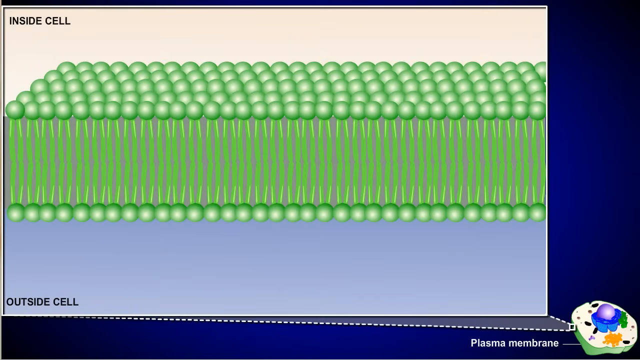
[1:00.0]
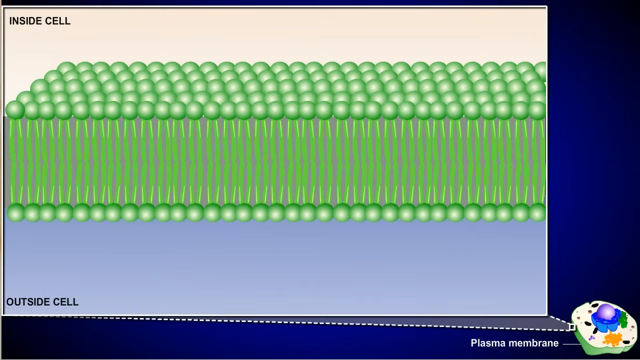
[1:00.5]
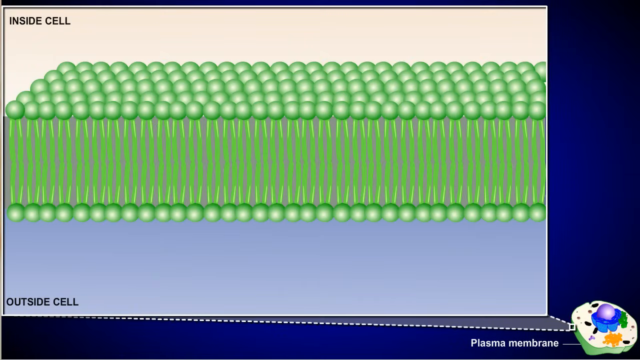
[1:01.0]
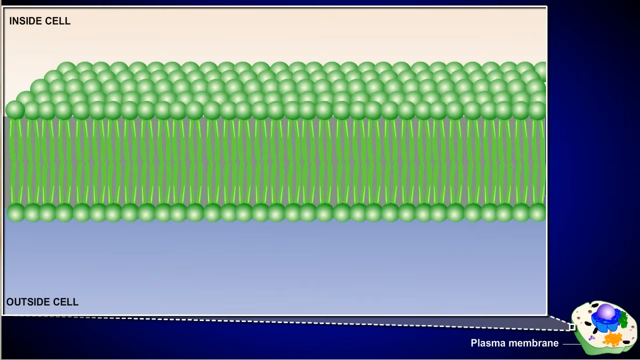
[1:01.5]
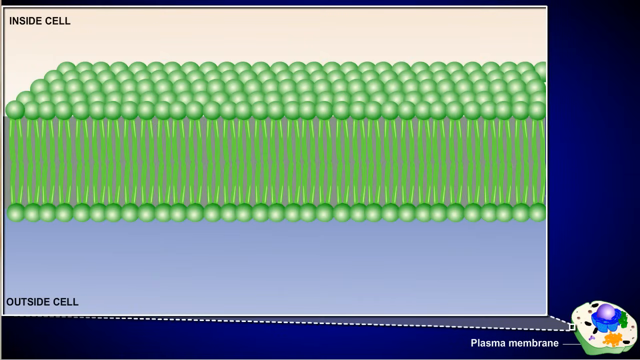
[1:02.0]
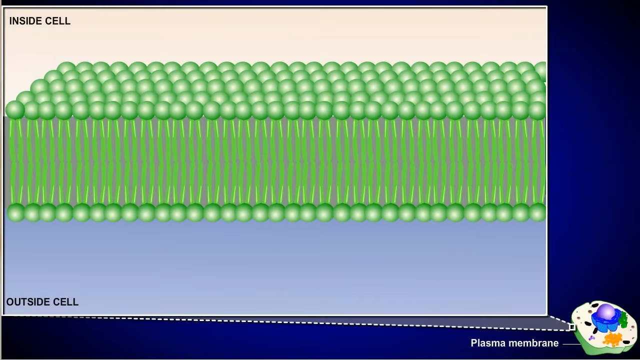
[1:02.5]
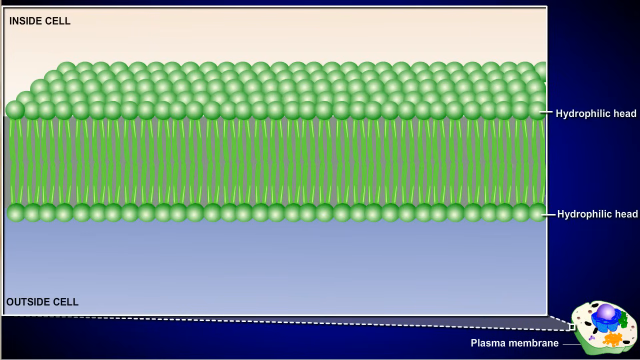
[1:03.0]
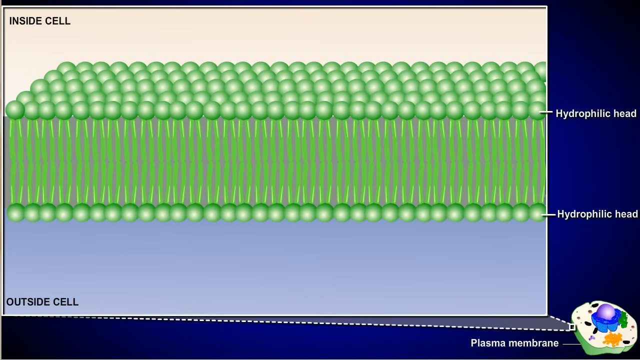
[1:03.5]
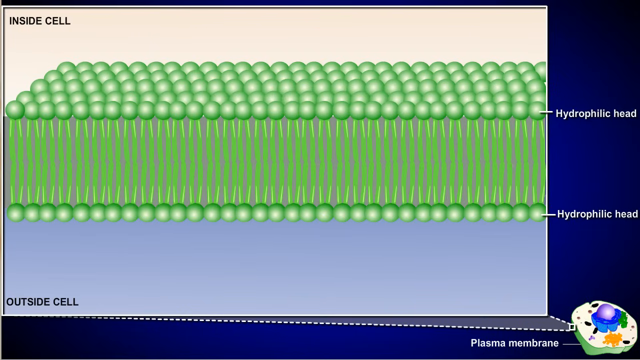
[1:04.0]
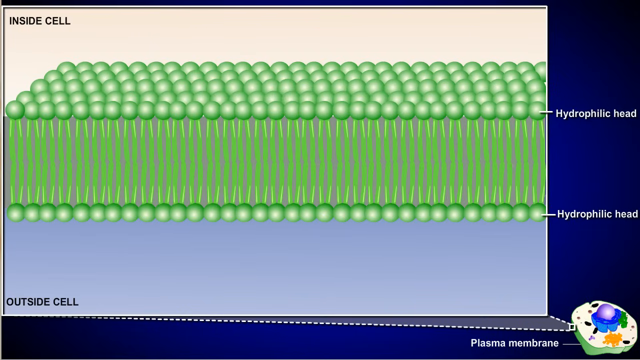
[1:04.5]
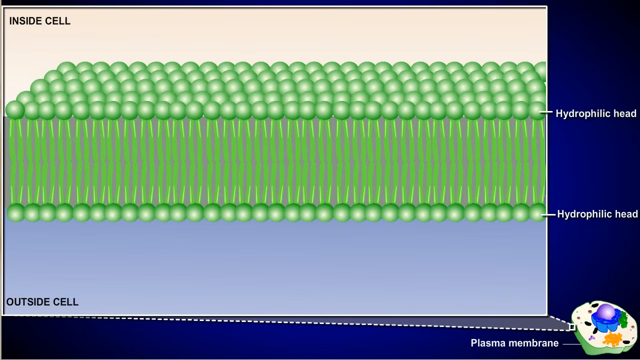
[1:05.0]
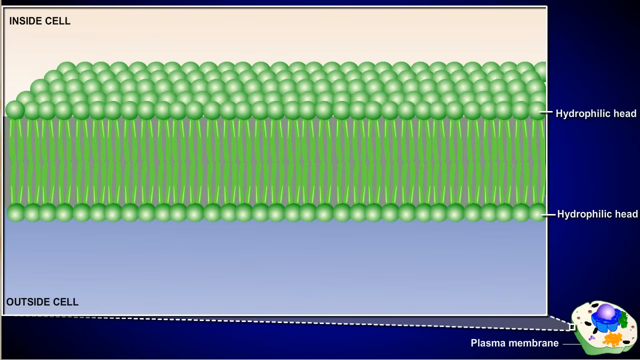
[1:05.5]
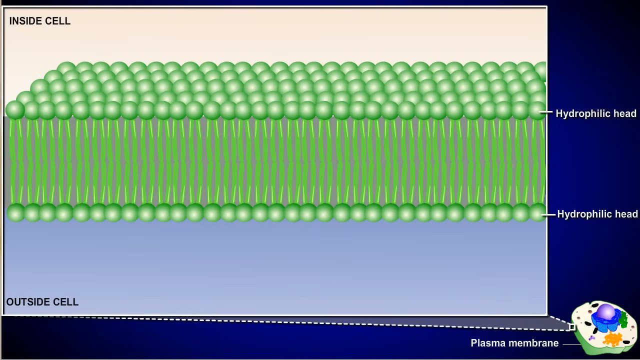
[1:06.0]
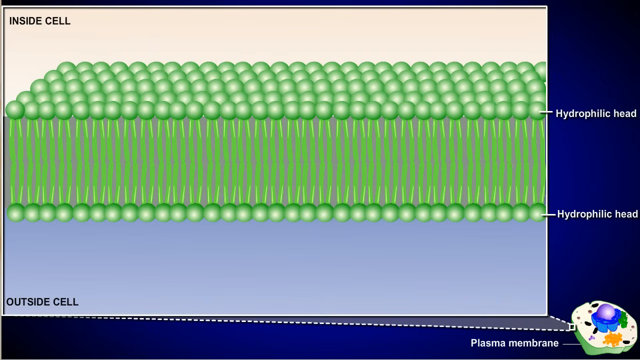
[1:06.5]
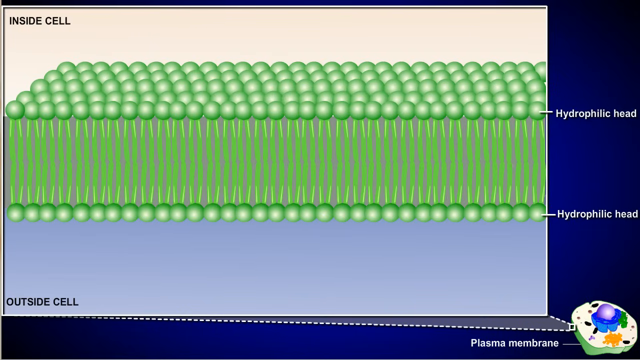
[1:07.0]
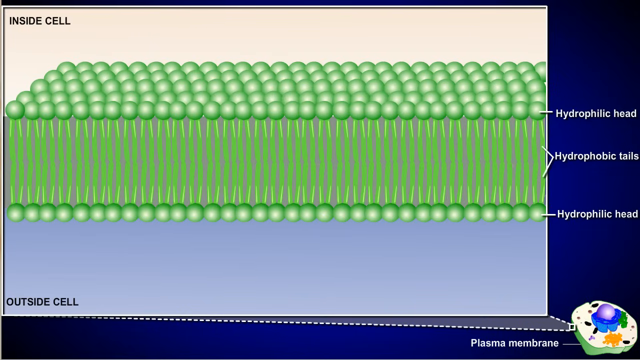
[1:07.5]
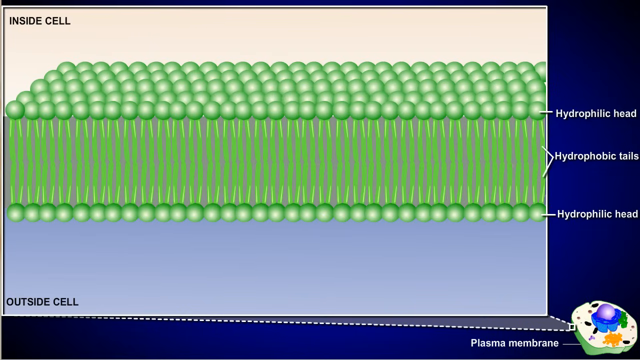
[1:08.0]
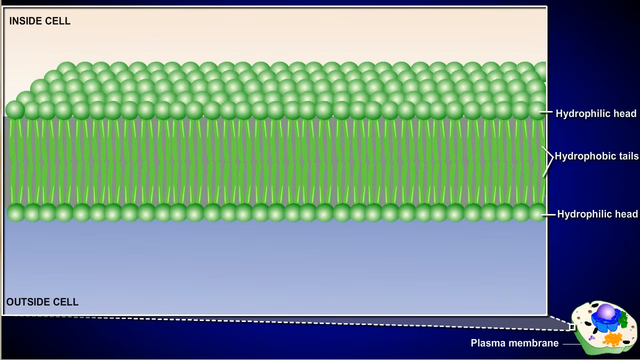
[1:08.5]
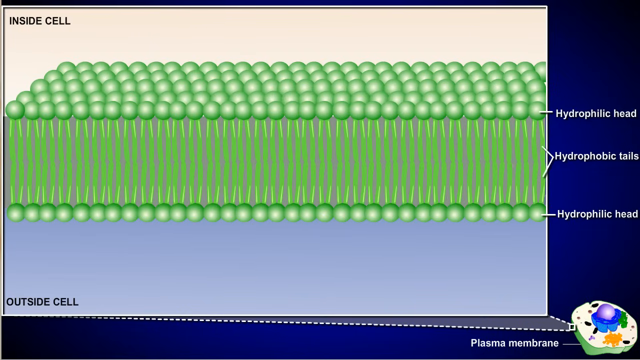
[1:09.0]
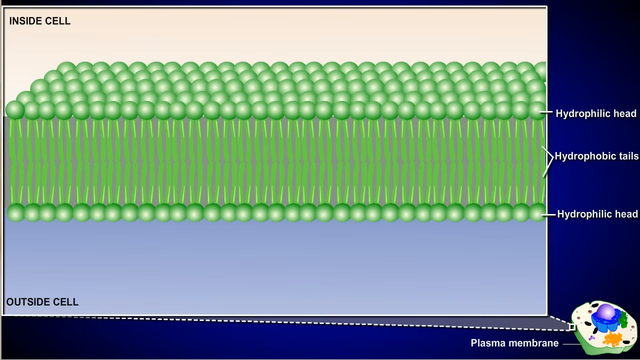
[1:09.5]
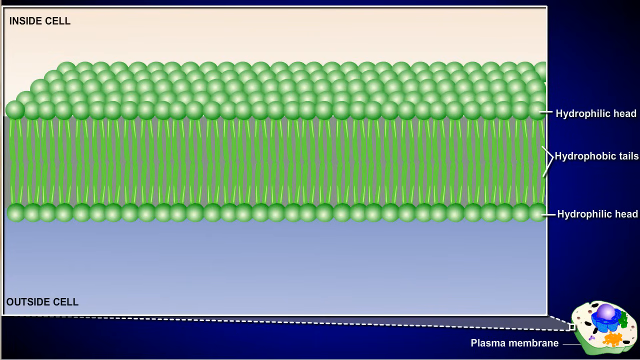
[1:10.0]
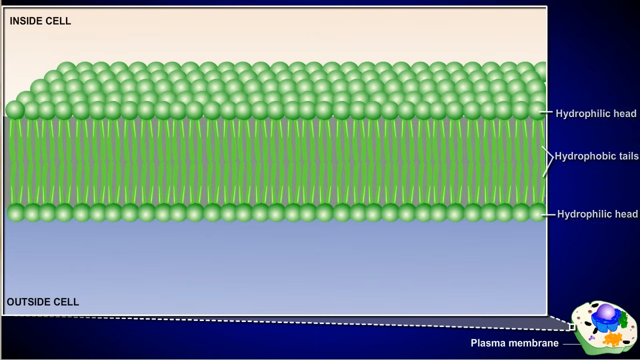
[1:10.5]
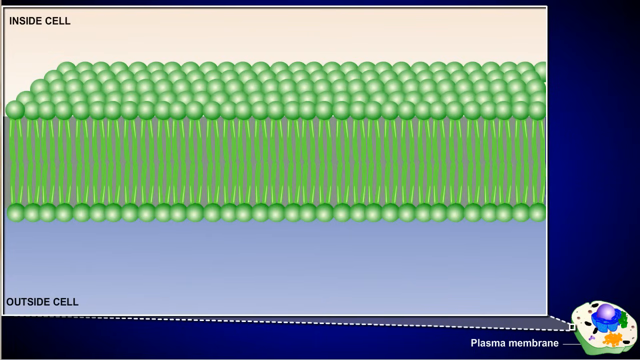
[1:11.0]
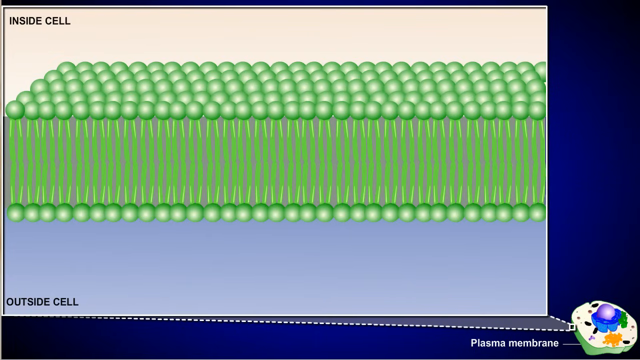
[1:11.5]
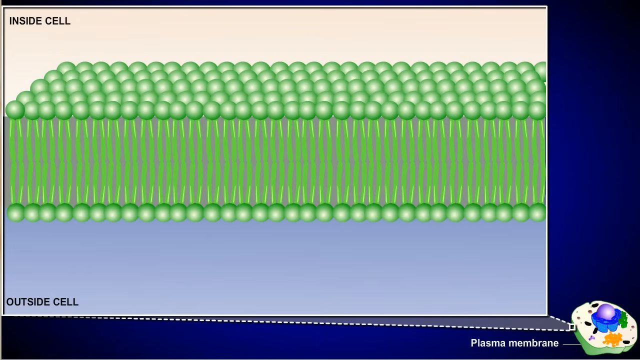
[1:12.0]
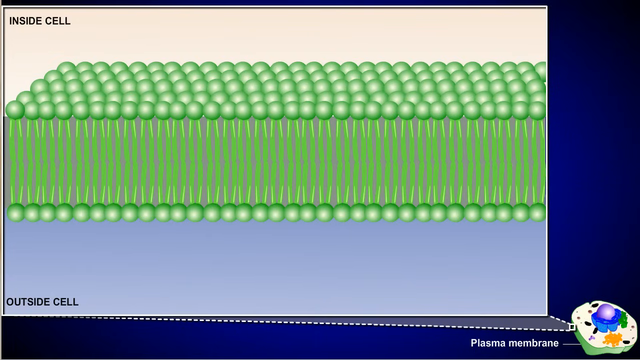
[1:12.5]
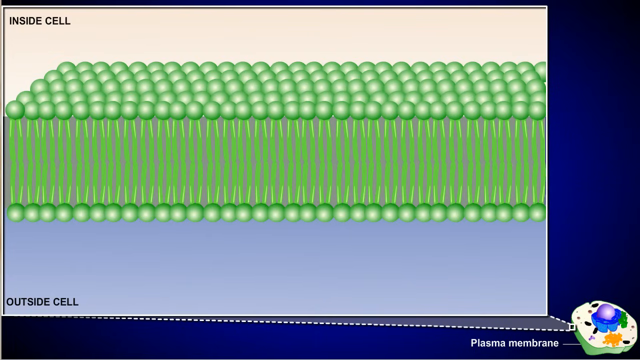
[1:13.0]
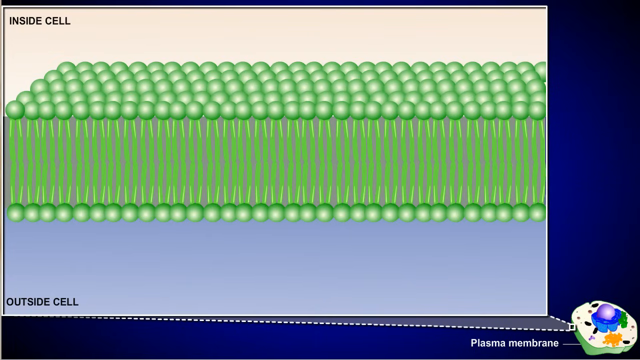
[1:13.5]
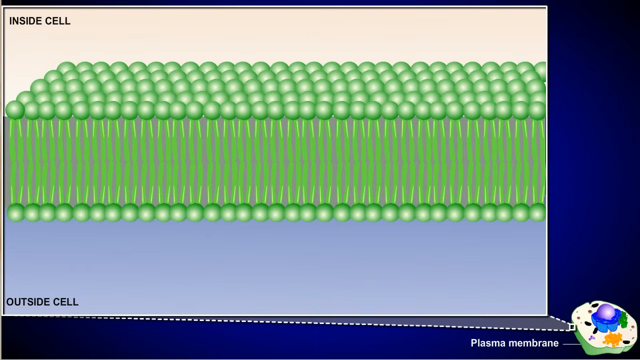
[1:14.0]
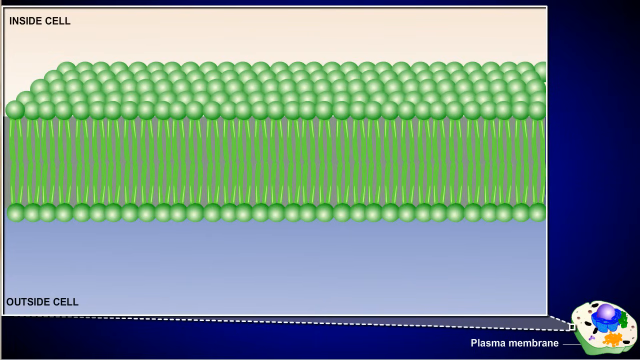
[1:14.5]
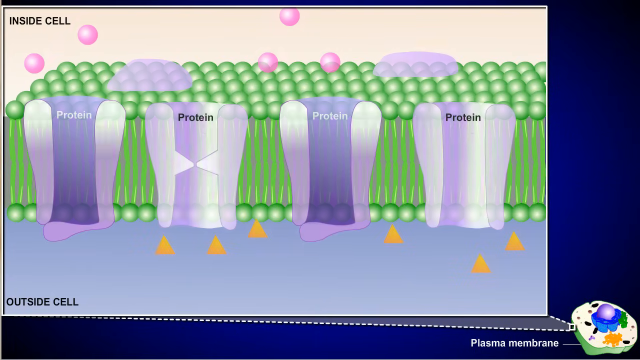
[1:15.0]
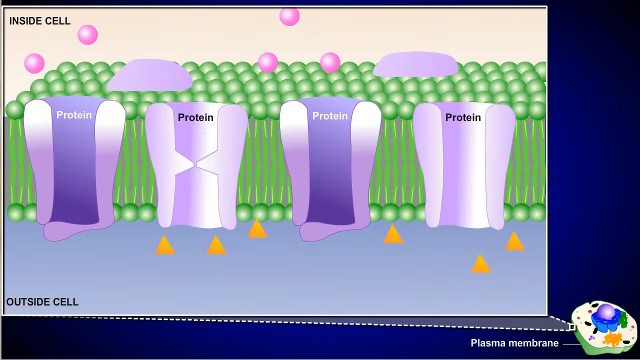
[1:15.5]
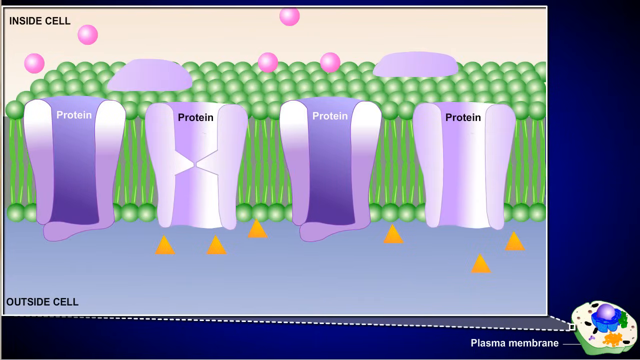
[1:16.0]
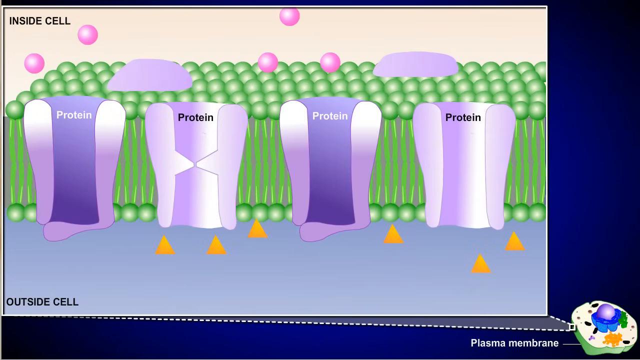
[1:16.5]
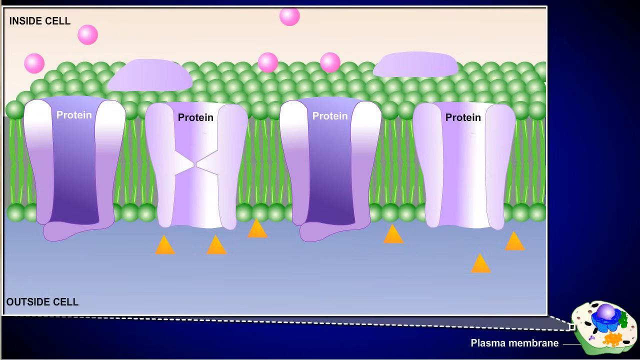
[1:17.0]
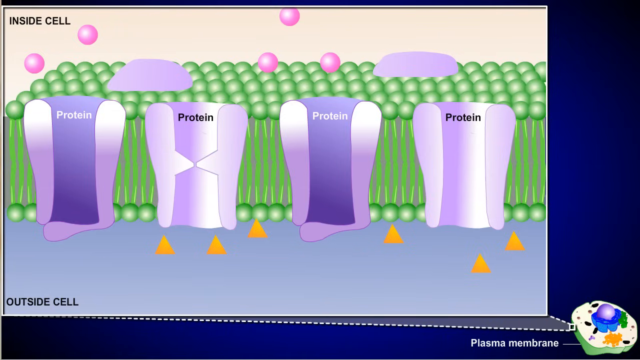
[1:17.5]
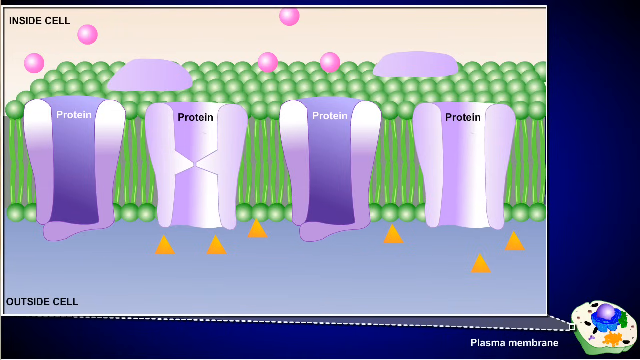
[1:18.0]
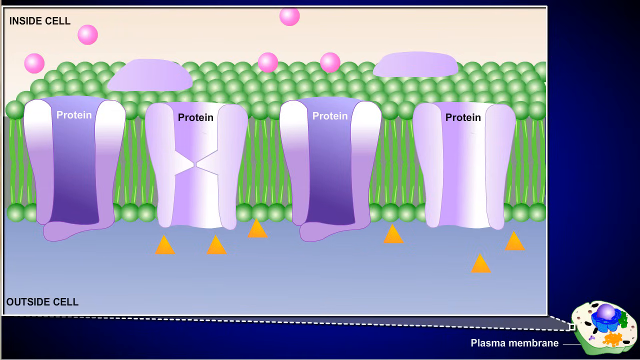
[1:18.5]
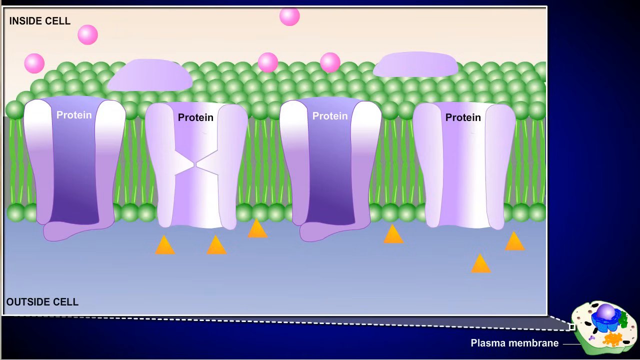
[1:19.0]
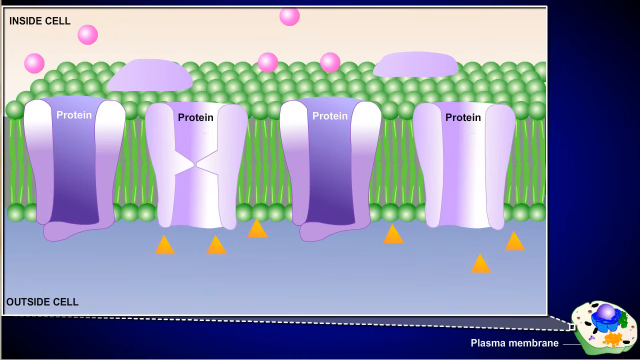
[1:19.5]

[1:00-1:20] On a blue background, a white square contains a teal background at the top with black lettering on the left saying "inside cell." Five rows of green circles run from left to right, with green stems attaching to other green stems below, which have another row of green circles at the bottom. The bottom end has a gray background, with black lettering on the bottom left saying "outside cell." A white dotted line underneath the box moves at an angle downwards toward the plasma membrane, labeled in white lettering at the bottom "plasma membrane." It points at a rounded off-white piece with a green bottom and a purple circle in the center, with what looks like a bluish wall around it, green stems to the right, orange stems in the front, and little brown dots. On the right side, one of the green circles is labeled "hydrophobic head," and the same label appears at the bottom row of green circles. In the middle, where the stems are, it says "hydrophobic tails." Purple balls appear, two on the left side and three in the center. Darker purple rounded pieces sit on top of the green circles, in four places of round-edged purple from left to right. Each is labeled "protein": the first in white, the next in black, the next in white, and the one on the far right in black. There are six yellow triangles, three to the left of center and three to the right of center.